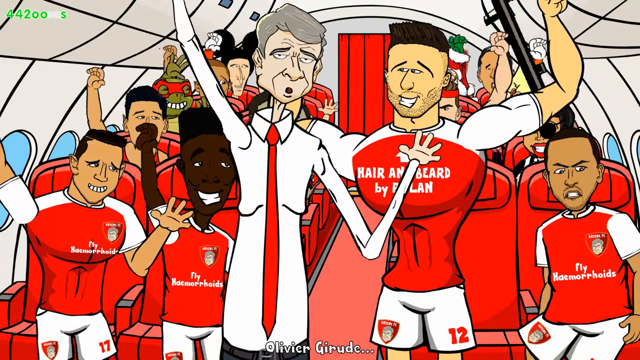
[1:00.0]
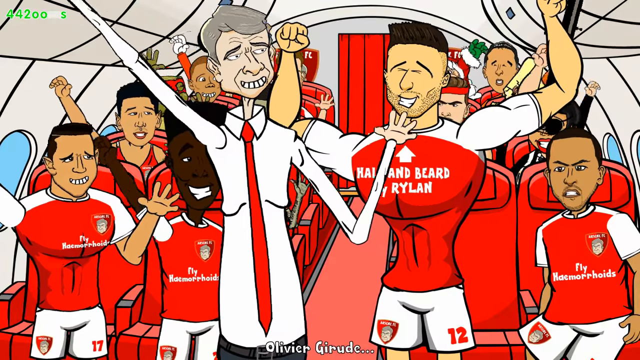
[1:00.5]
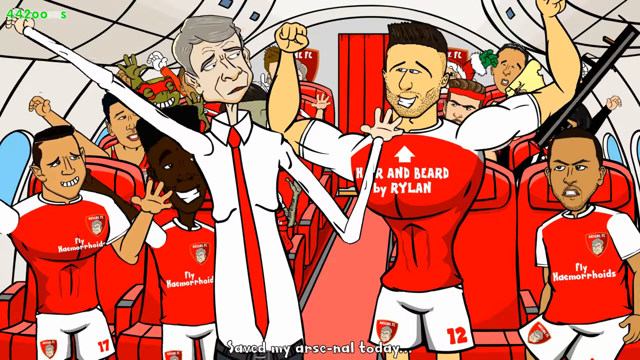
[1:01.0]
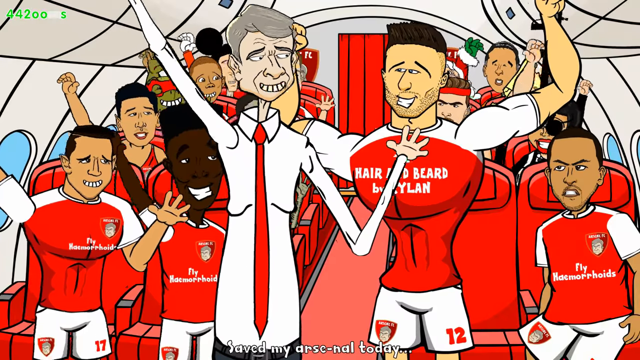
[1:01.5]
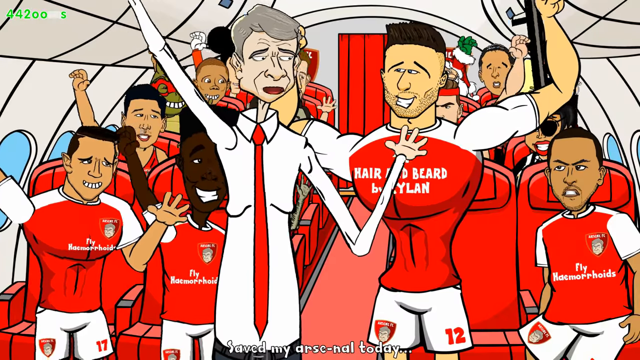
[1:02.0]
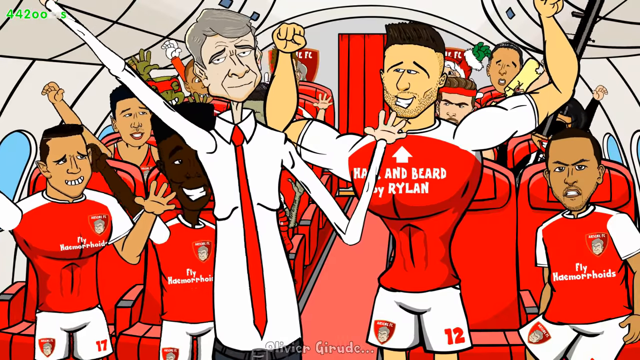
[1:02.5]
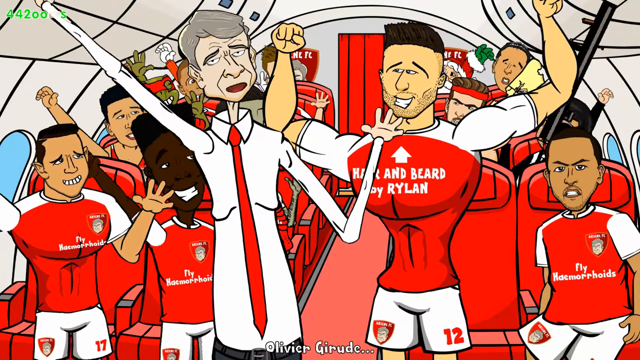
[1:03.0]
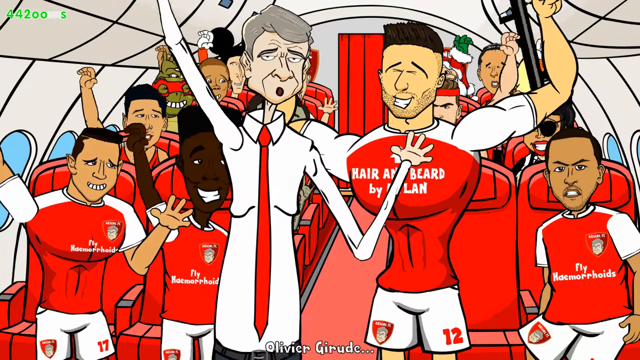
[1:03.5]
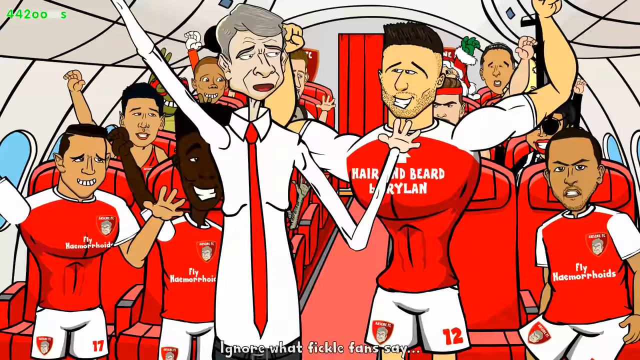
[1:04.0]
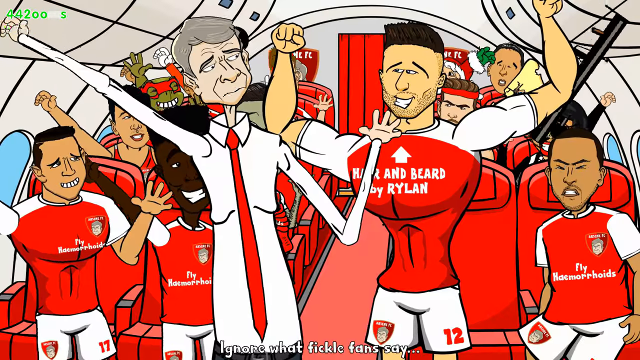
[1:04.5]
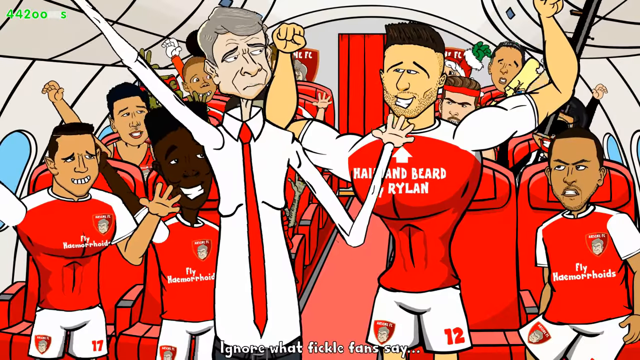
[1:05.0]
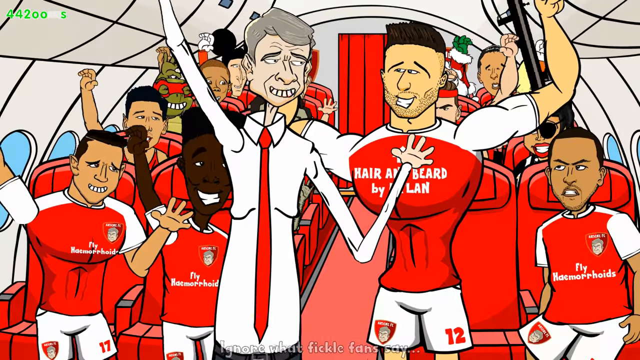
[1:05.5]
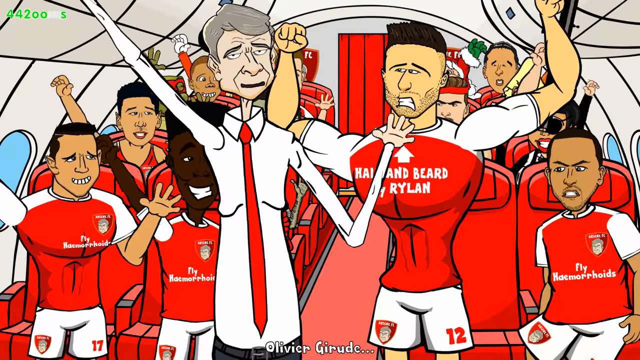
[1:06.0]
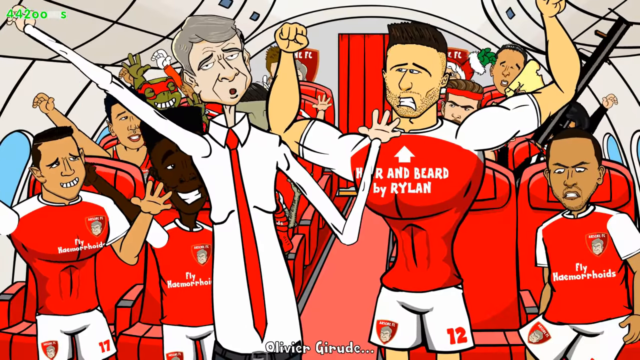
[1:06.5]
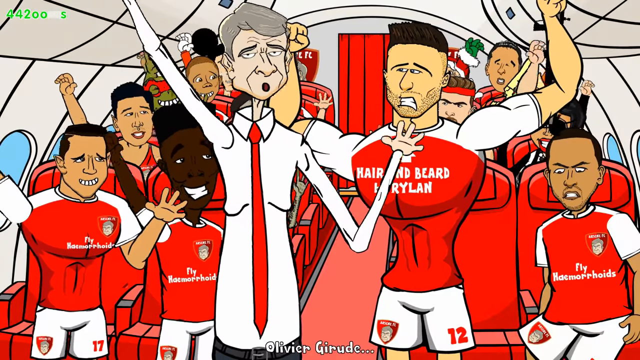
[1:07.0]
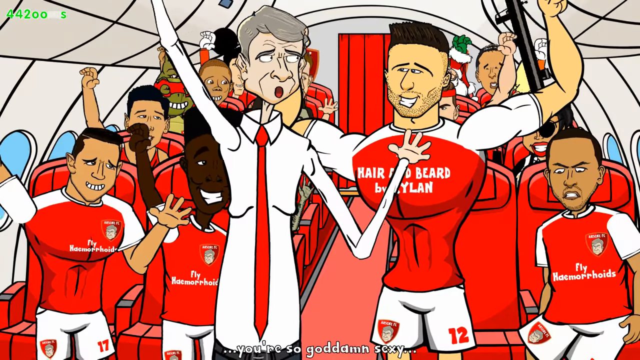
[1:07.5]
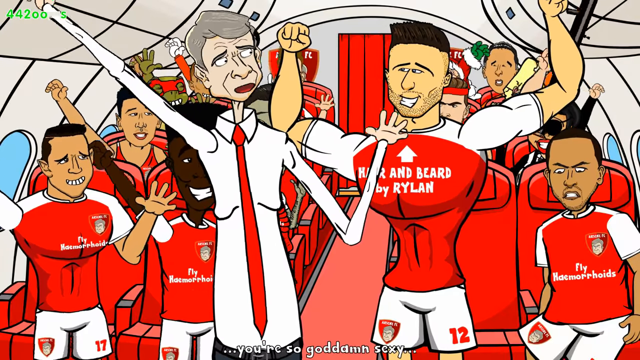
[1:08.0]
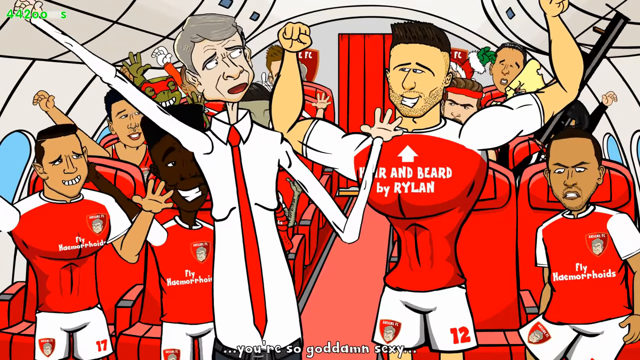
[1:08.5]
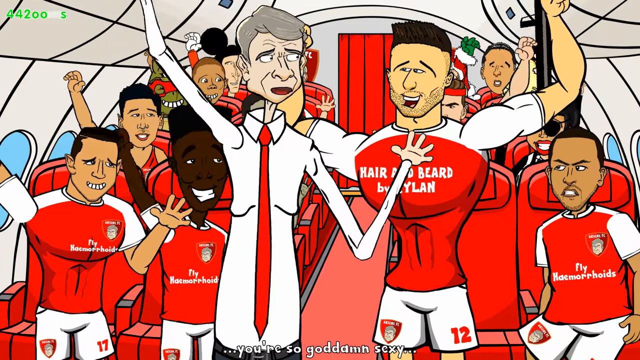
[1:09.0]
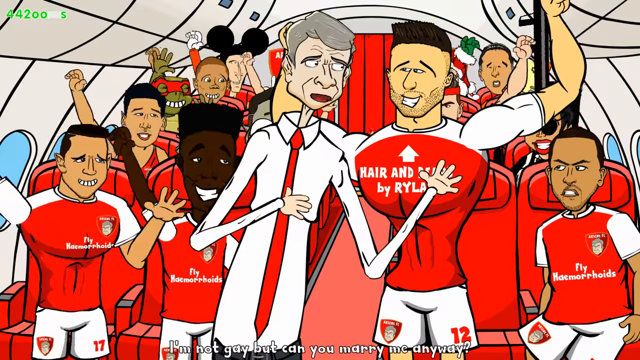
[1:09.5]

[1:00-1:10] The team is on the plane, celebrating the victory in the football match. The coach is in the middle in his red tie and white shirt, with very long arms. To his side is the handsome hero of the match in the "Hair and Beard by Rylan" shirt, and on the very right is the smaller, Spanish-looking player in the fly hemorrhoids shirt with a very foul look on his face. On the left side of the screen are a black player and a few other Spanish players. In the back are a mutant ninja turtle player and the fellow with the Mickey Mouse ears, and there is a Christmas stocking in the back of the plane. The players are in a very cheerful mood, moving back and forth, apparently singing some kind of anthem or song. The coach leads the singing, and everyone is very happy except the fellow on the lower right with the foul look on his face.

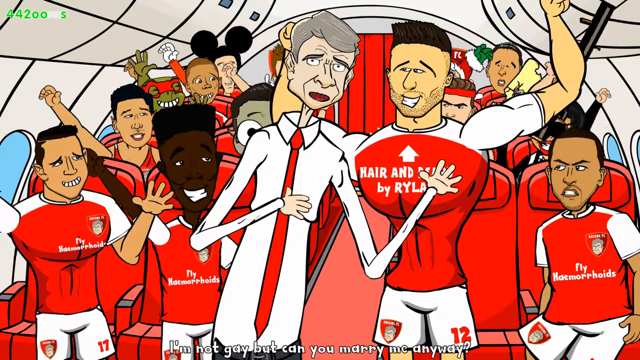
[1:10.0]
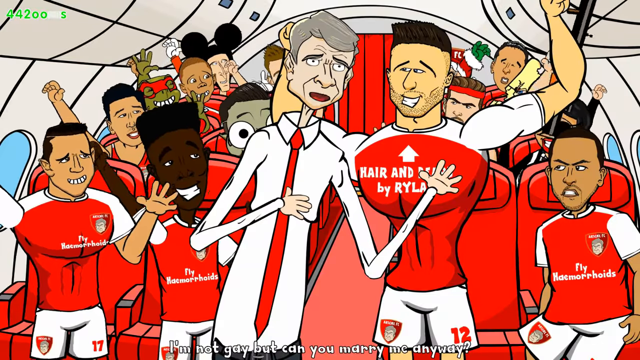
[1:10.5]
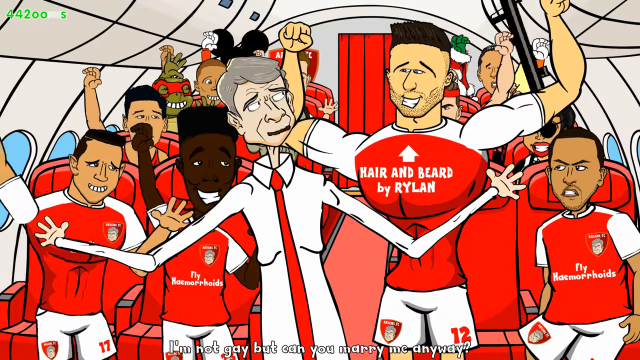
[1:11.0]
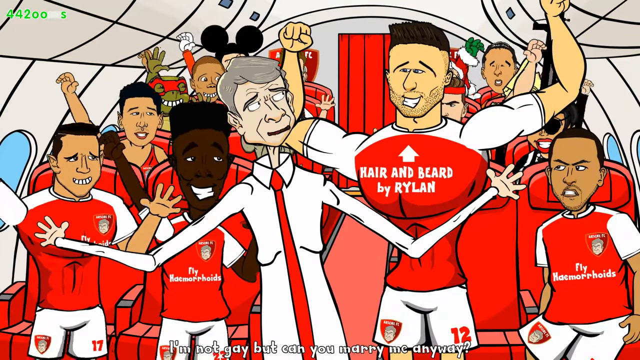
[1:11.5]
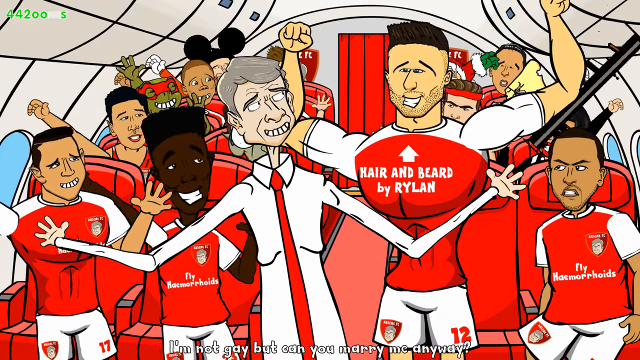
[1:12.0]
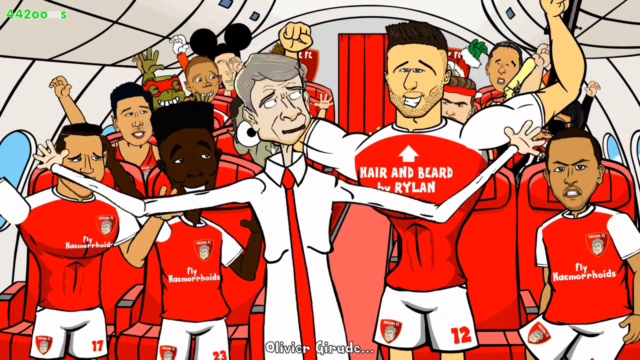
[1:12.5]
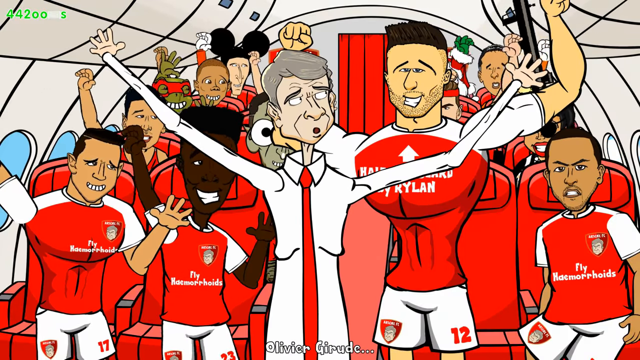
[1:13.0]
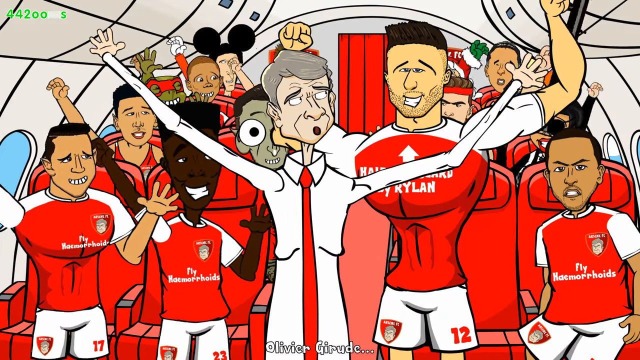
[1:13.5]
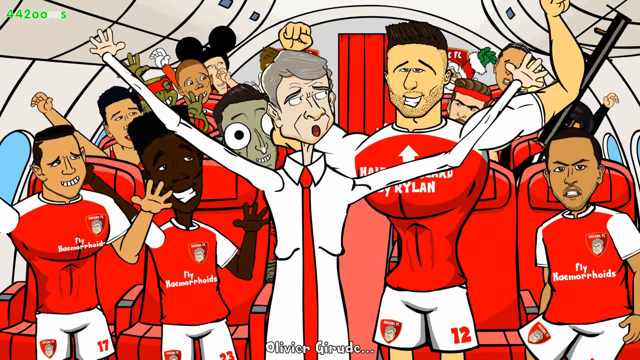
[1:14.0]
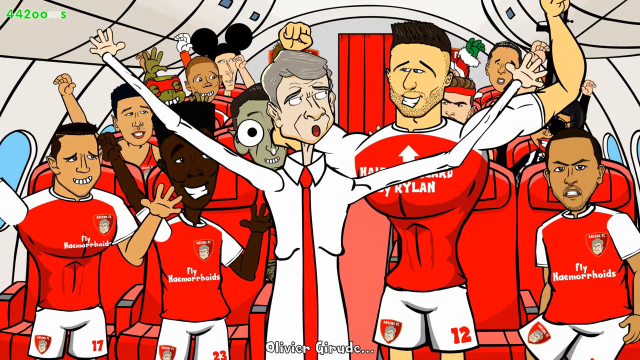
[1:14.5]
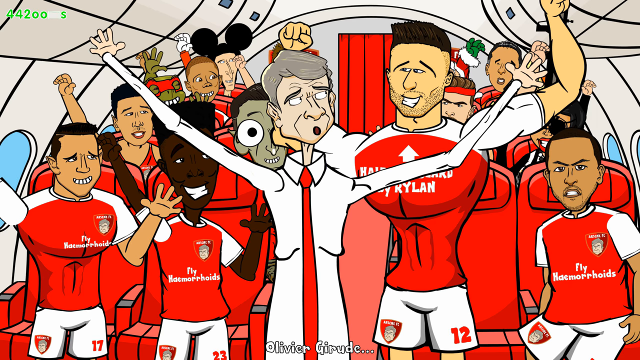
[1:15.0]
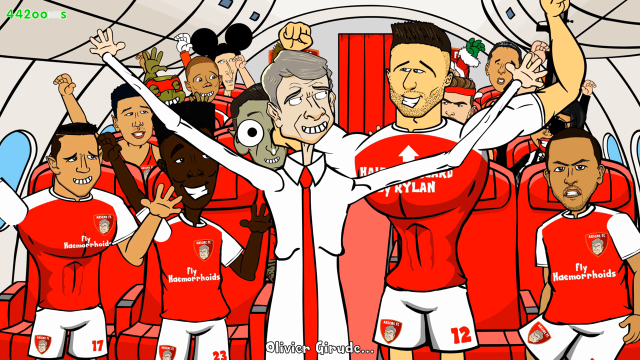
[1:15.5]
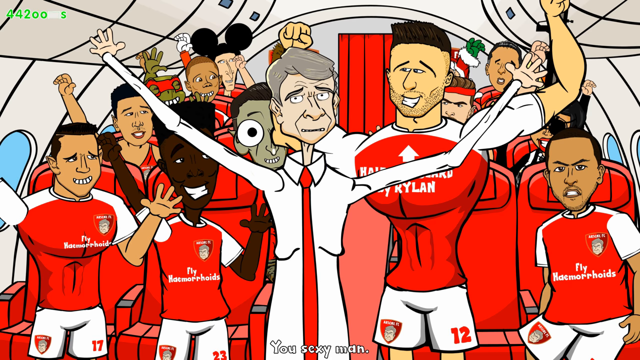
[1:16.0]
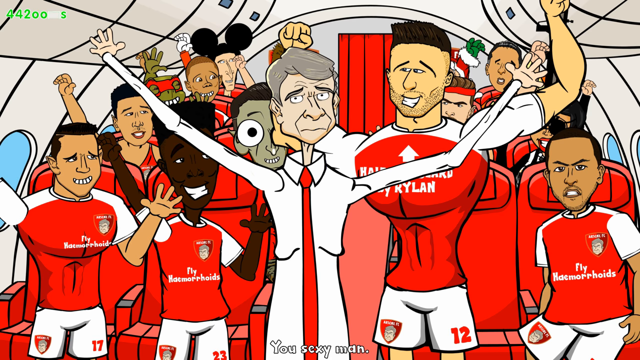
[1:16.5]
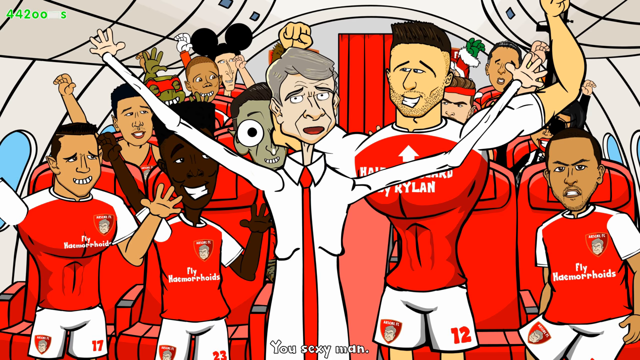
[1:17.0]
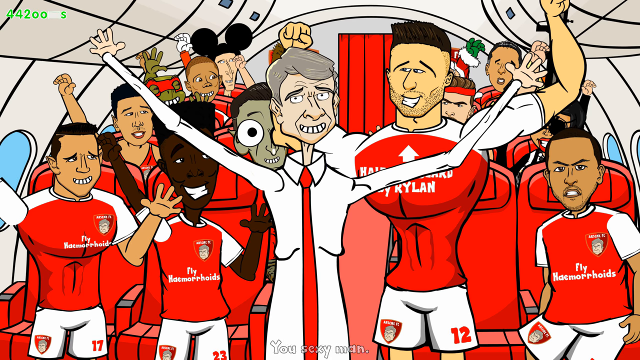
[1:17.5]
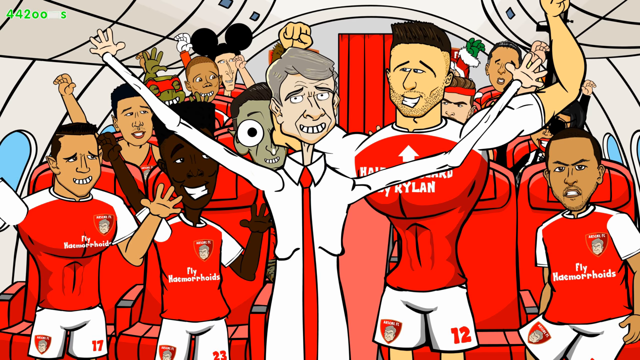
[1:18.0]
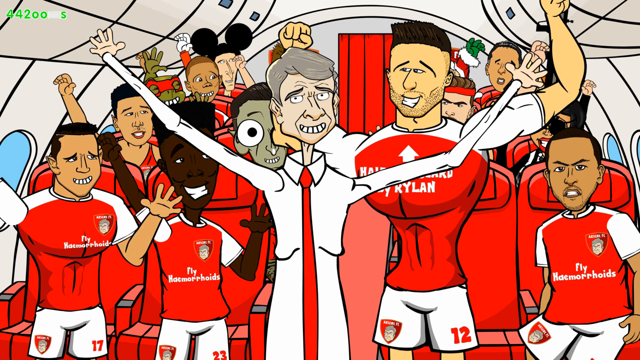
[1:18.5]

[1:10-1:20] The celebration continues on the airplane, led by the gray-haired, skinny coach in his white shirt and thin white tie, with very long arms. To his side is the hero of the match, a very muscular fellow in a t-shirt that says "hair and beard by Ryland." The other players wear red t-shirts that all say "fly hemorrhoids." They cheer and sing with their hands up and smiles on their faces. At the center, the coach leads the singing or cheering, spreading his arms apart as if singing "Mammy," looking at the screen and continuing to smile. Everyone smiles except the smaller, Spanish-looking fellow on the lower right, who has a very angry look on his face while everybody else is happy, smiling and cheering.